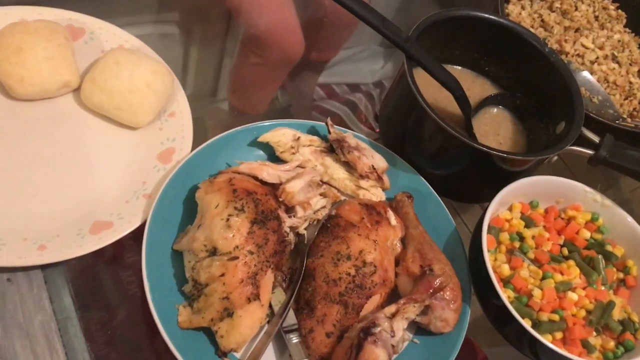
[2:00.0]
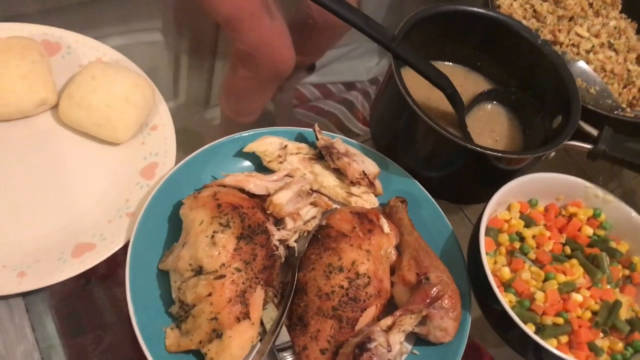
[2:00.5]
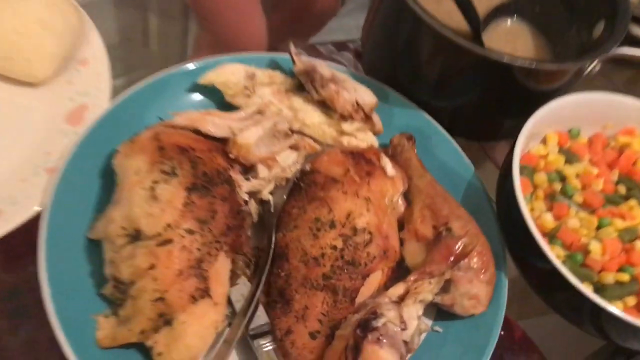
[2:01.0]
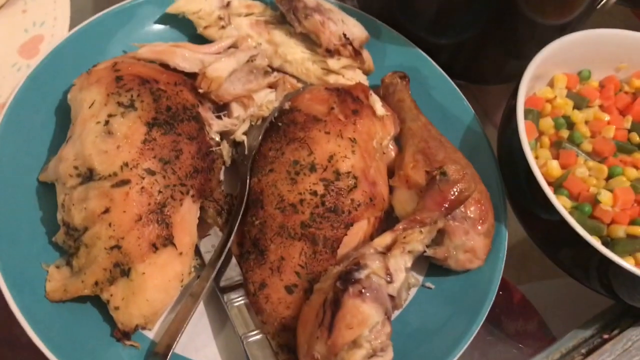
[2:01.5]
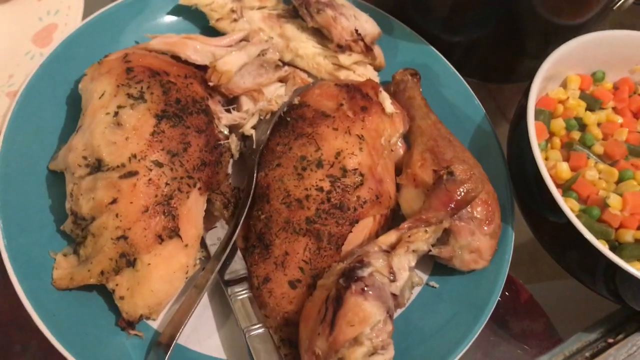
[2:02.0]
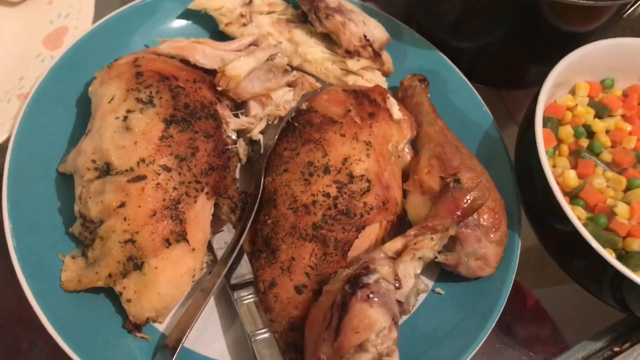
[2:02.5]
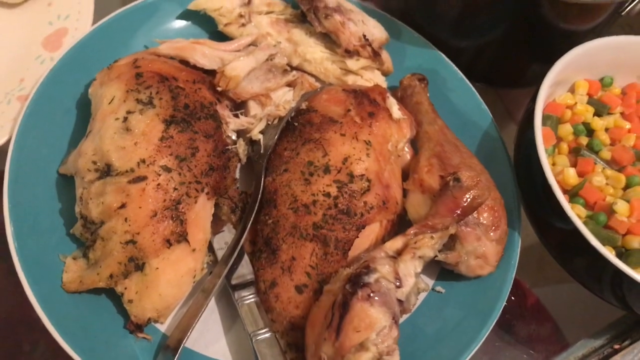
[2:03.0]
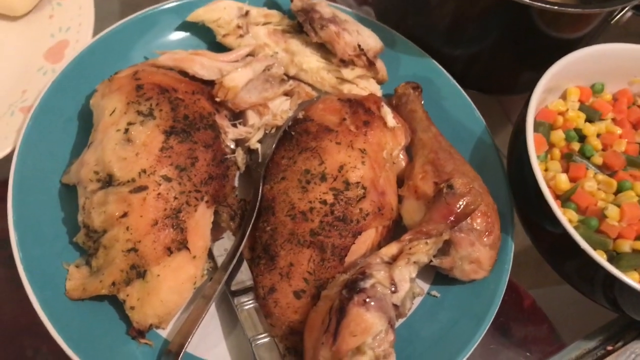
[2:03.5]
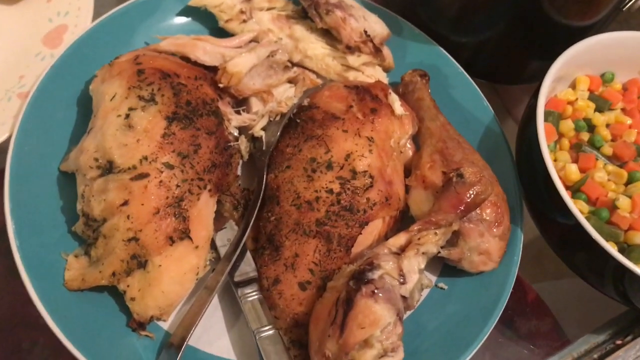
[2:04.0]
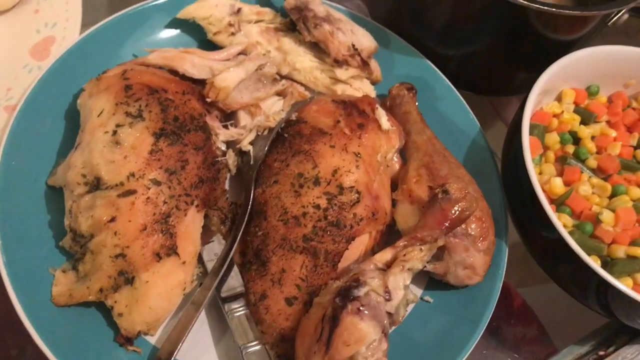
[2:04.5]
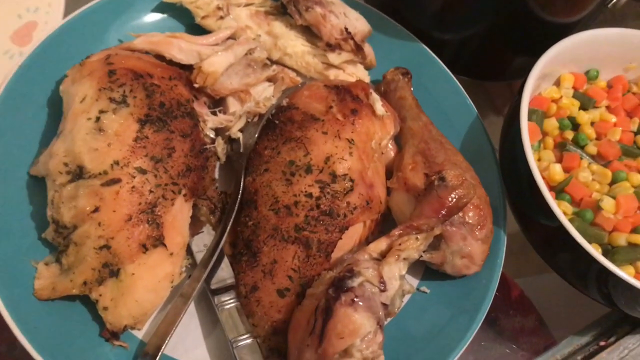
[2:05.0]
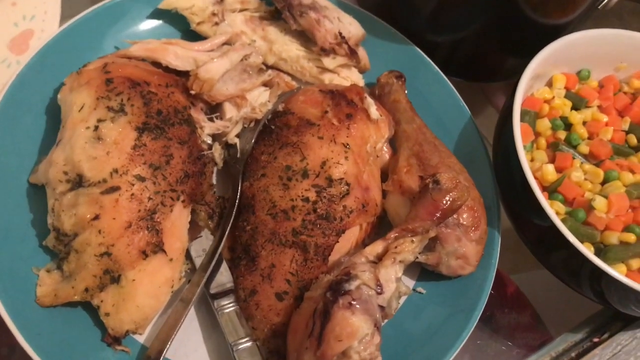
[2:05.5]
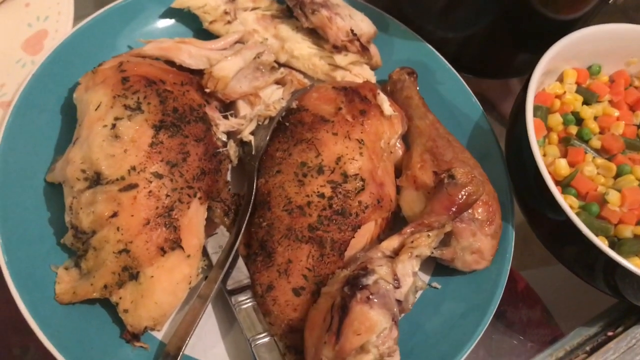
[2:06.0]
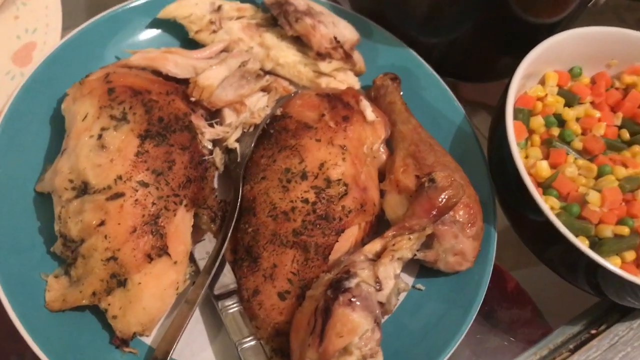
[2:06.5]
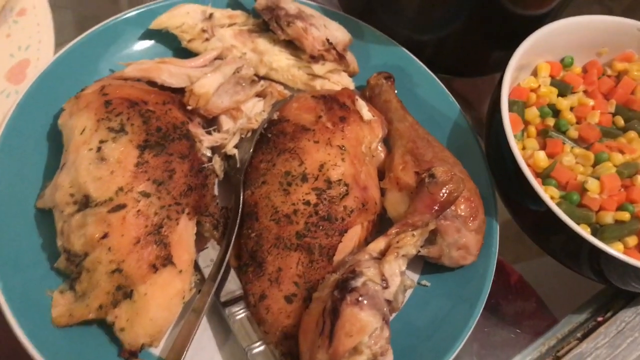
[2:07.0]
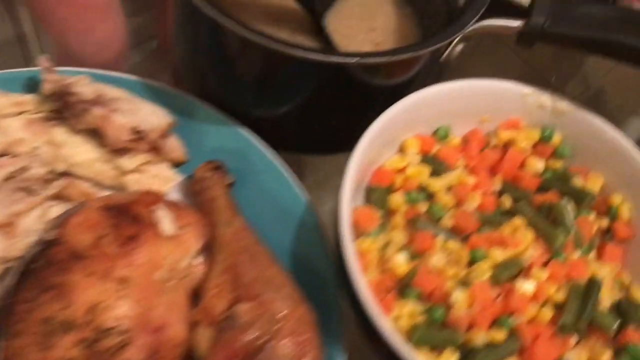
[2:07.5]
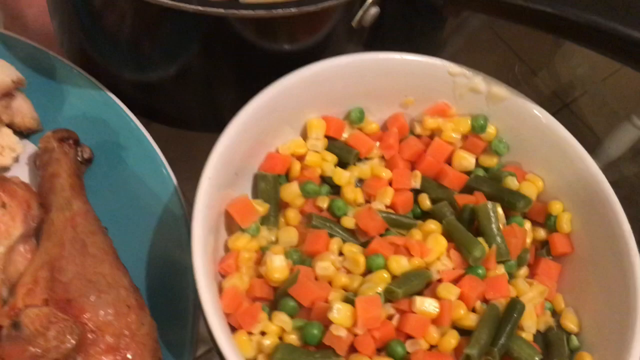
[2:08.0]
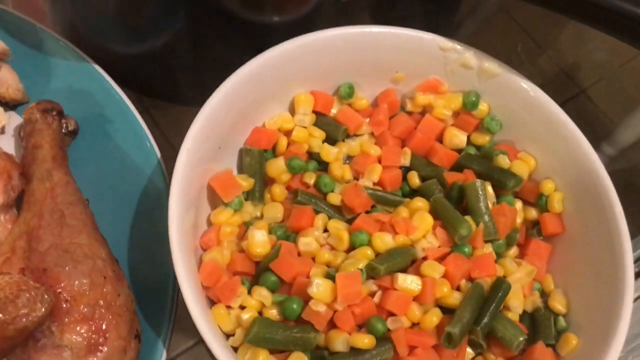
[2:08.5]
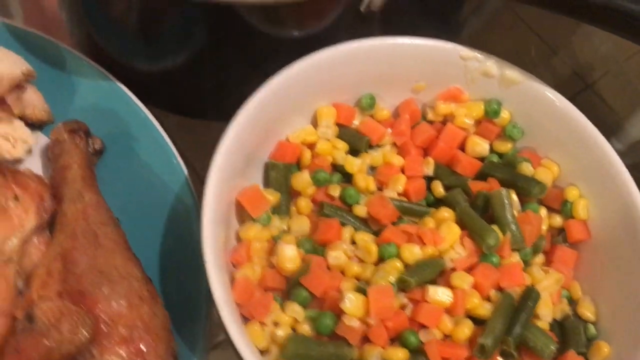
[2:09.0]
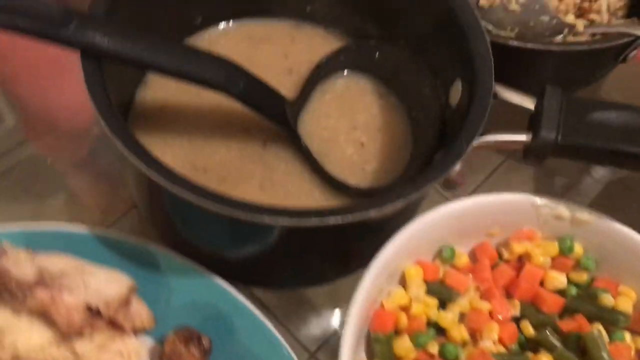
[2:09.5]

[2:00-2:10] A new dinner is showcased: a white plate with pink hearts holding two dinner rolls, a teal plate with some sort of oven-roasted poultry, either chicken or turkey, a bowl of mixed vegetables including carrots, corn, peas and green beans, a black pot with a liquid that looks to be gravy and a black ladle inside, and a pot in the far right corner that looks to contain stuffing, with a metal spoon. The person zooms in on the different plates and sides on the table, starting with the plate of poultry, apparently talking about it, before sliding the camera over to the bowl of mixed vegetables, the pot of what looks to be gravy, and the stuffing in the pot in the upper right corner. All of the food seems to be on a glass table, and a person's legs are visible underneath the table.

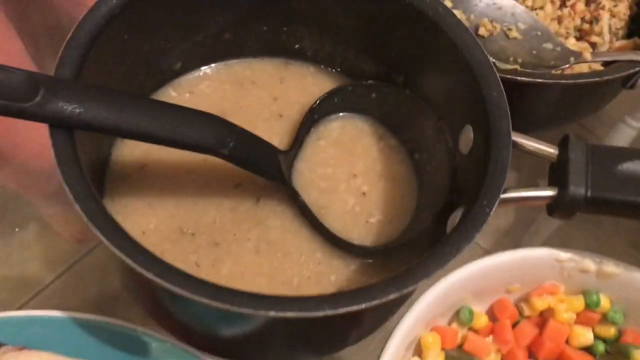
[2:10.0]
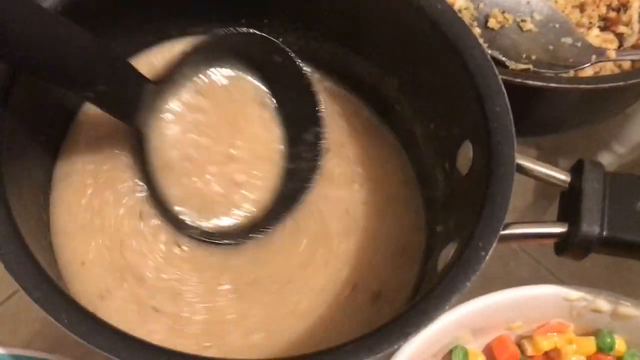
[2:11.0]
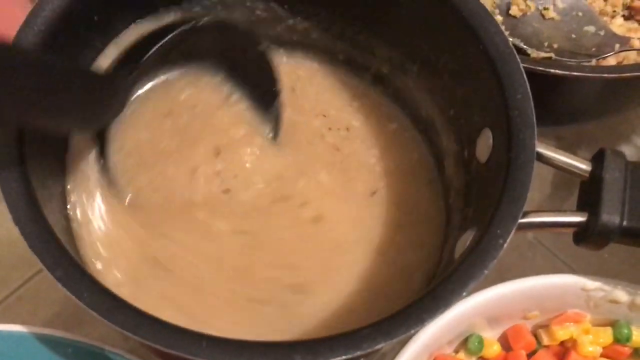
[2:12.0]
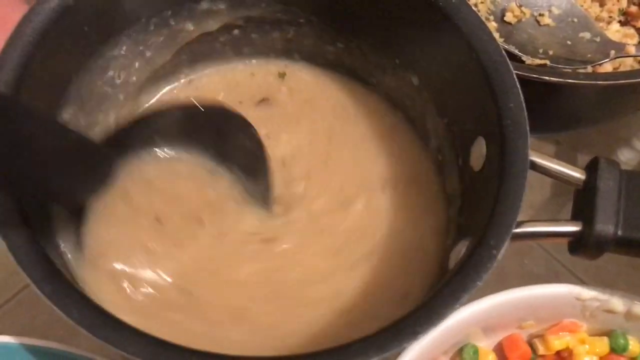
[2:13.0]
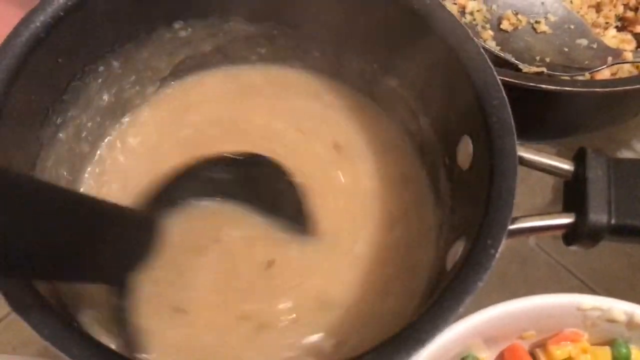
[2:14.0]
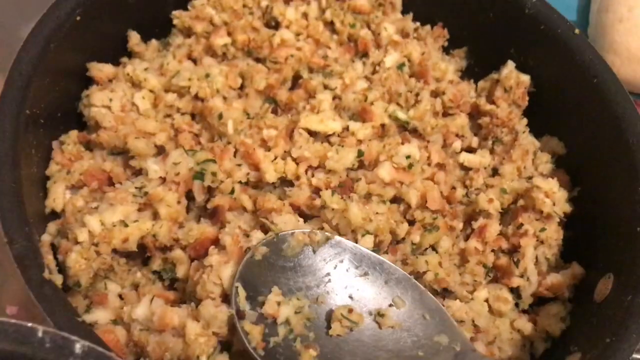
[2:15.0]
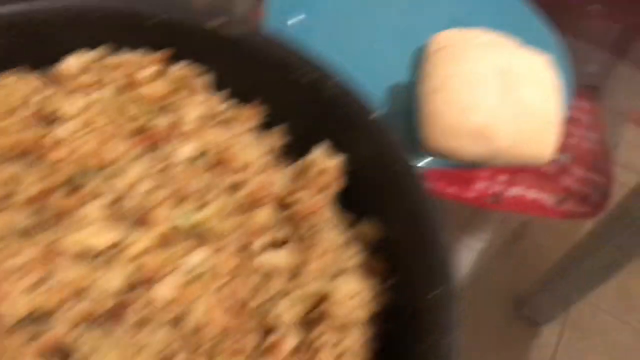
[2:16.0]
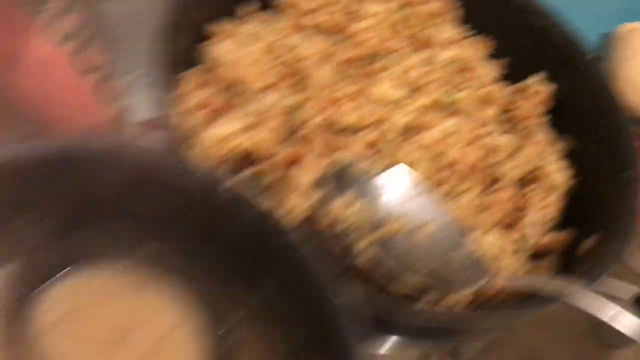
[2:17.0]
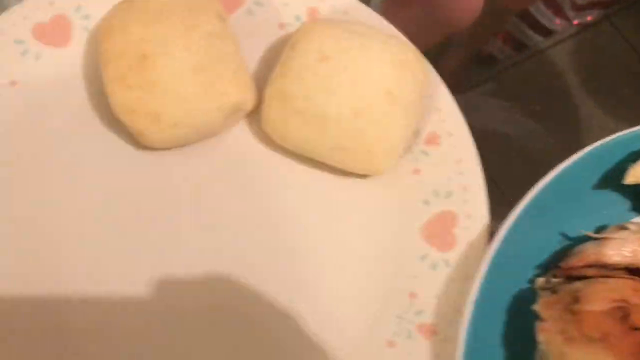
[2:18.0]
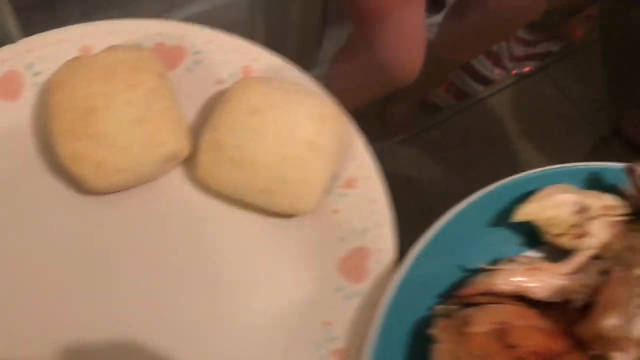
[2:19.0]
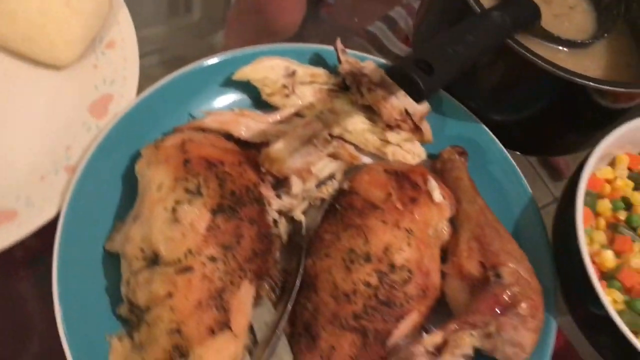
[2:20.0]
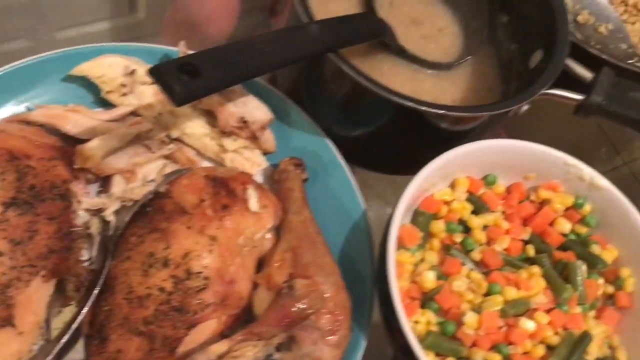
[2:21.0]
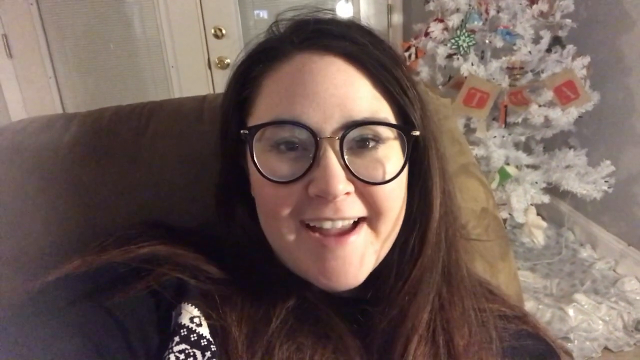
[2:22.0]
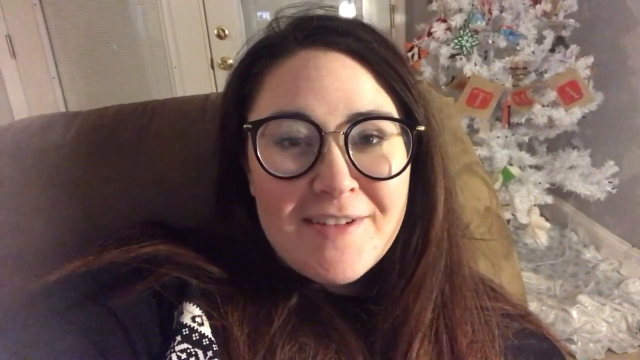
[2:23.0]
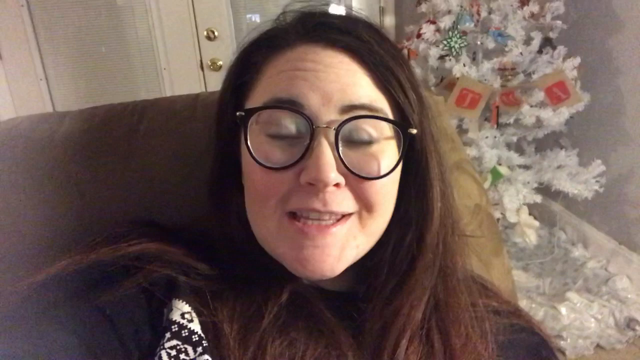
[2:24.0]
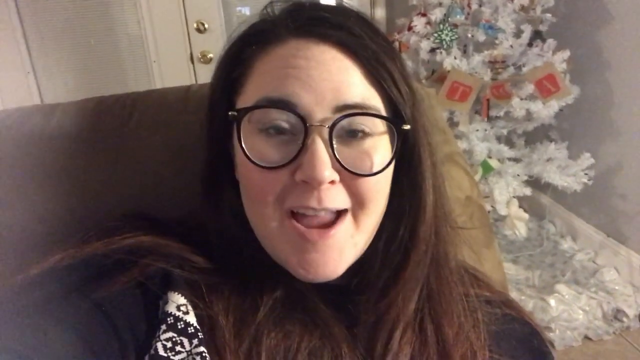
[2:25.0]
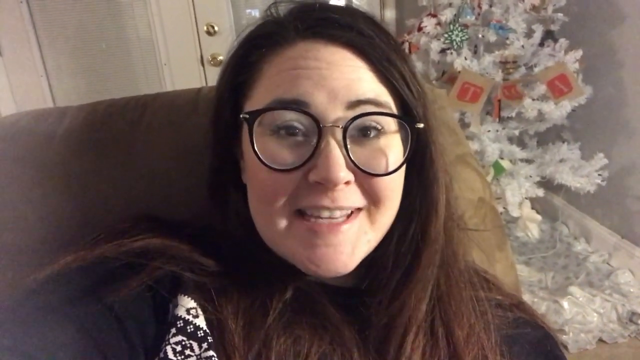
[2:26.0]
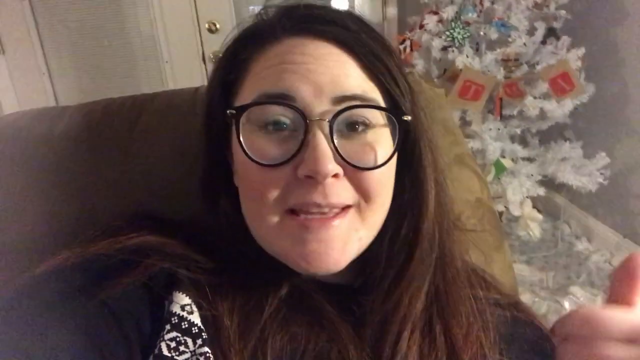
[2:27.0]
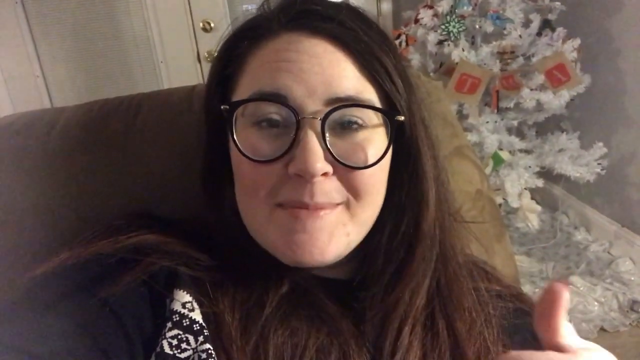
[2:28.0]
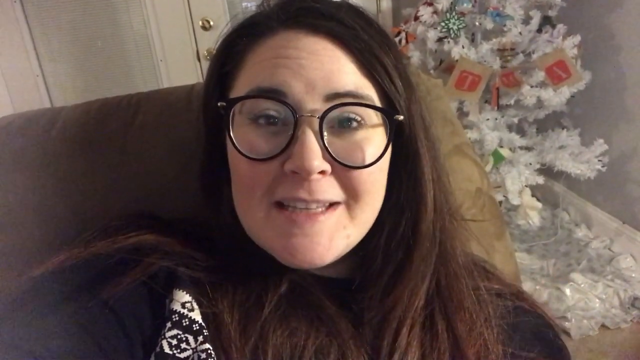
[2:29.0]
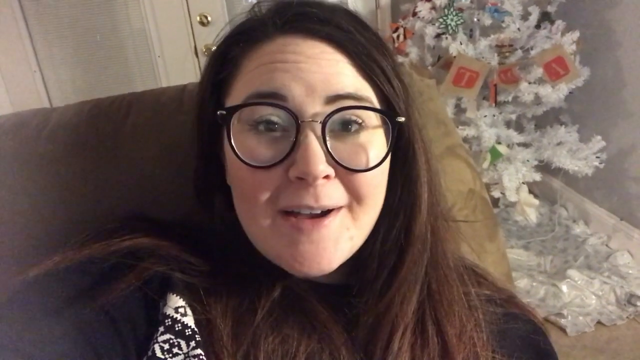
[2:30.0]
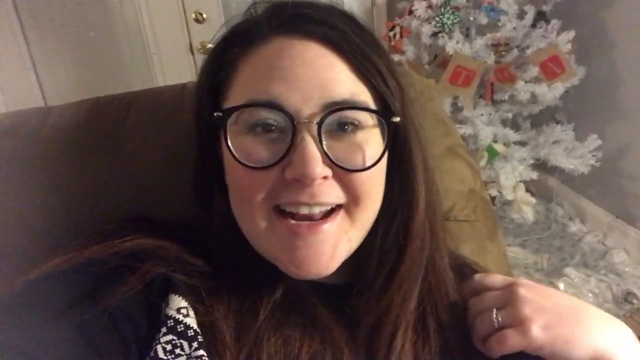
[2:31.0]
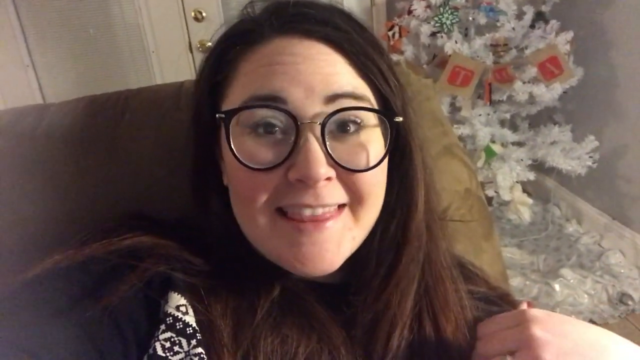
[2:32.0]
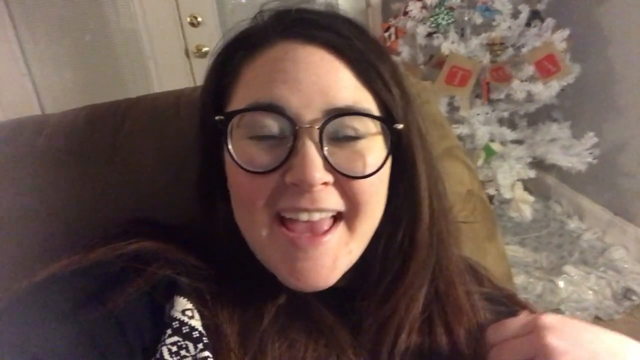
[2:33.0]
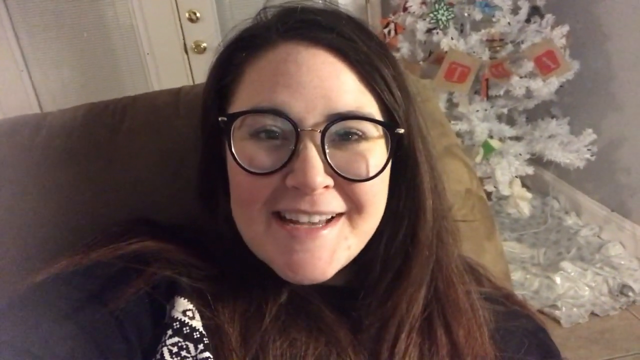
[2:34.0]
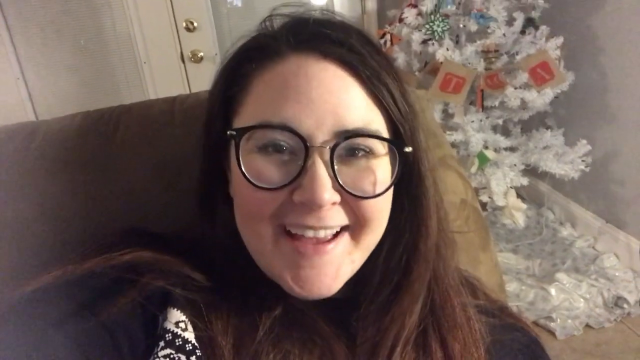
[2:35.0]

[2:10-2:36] The person showcases the pot of what looks to be gravy, with a ladle already sitting in it, then grabs the ladle and stirs the gravy around. The camera pans over to a pot full of stuffing with a yellow metal spoon inside, then shows a teal plate with a dinner roll with a bite taken out of it, and pans back to the white plate with pink hearts, where there are another two dinner rolls. The camera slowly moves over all of the food on the table before the woman turns the camera around in a selfie manner and talks to the camera. Behind her is a white Christmas tree with ornaments. She has medium-length brown hair and large black-rimmed glasses, and she is sitting on what looks to be a brown recliner, talking with a smile on her face. She seems to be in a very cheery mood, uses her hands expressively, plays with her hair and smiles as she continues talking to the camera. The lock and handle of a glass door are visible in the background.